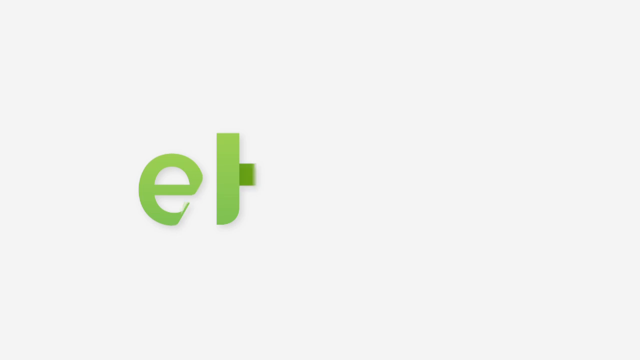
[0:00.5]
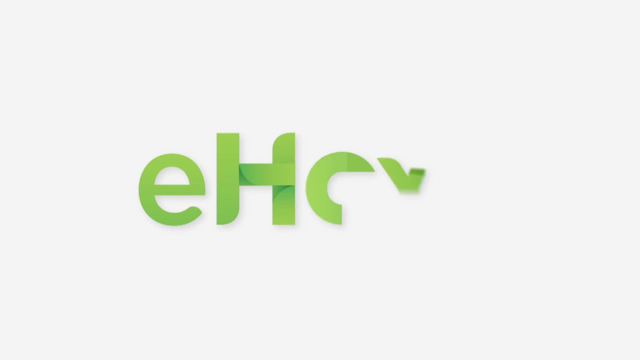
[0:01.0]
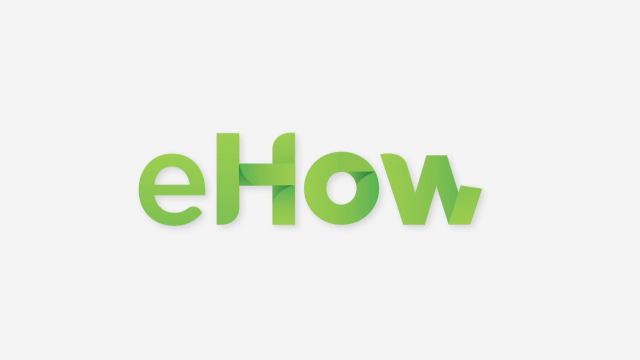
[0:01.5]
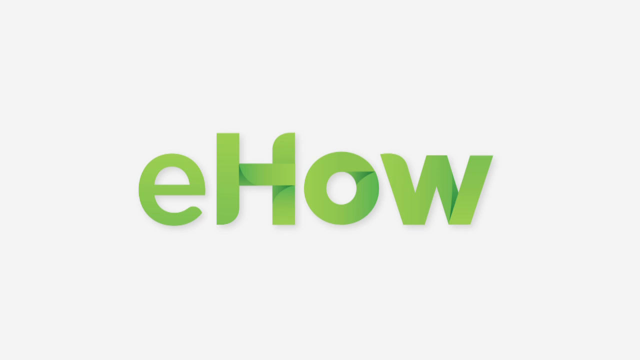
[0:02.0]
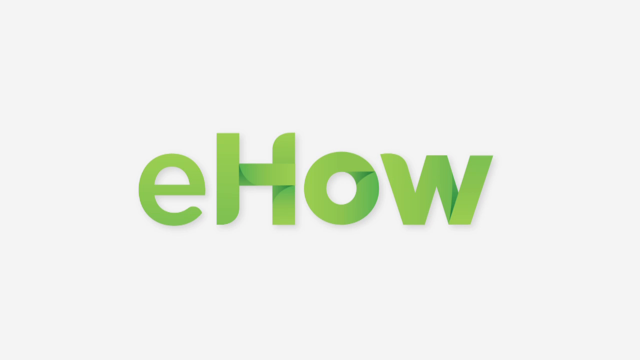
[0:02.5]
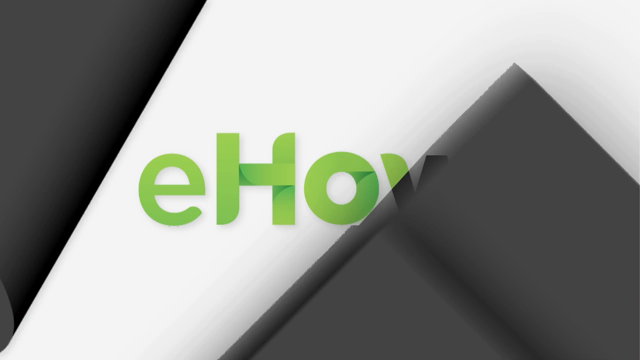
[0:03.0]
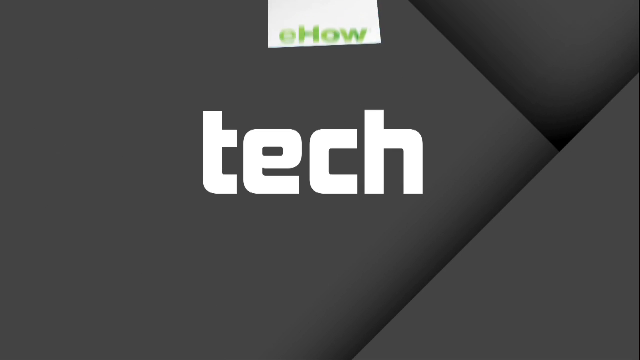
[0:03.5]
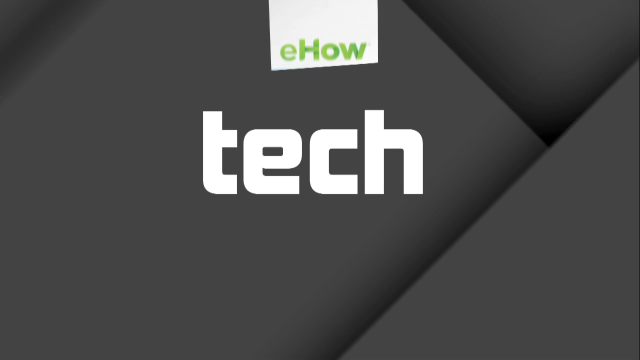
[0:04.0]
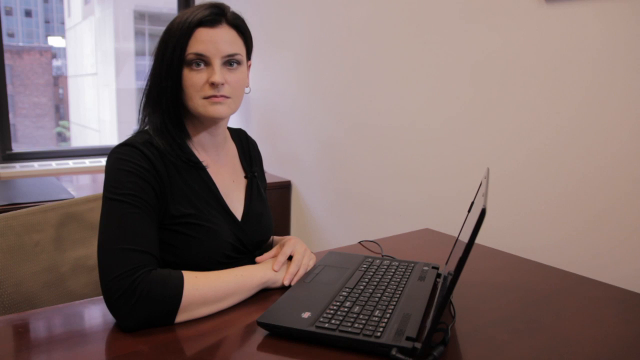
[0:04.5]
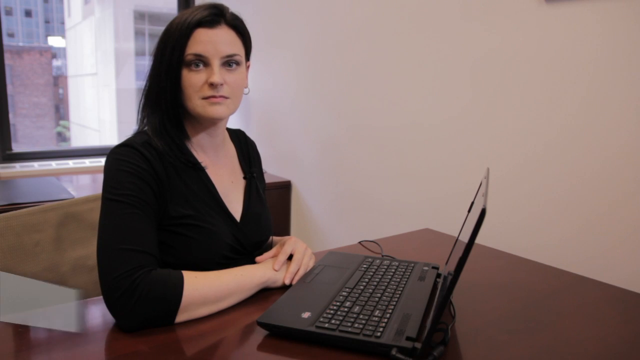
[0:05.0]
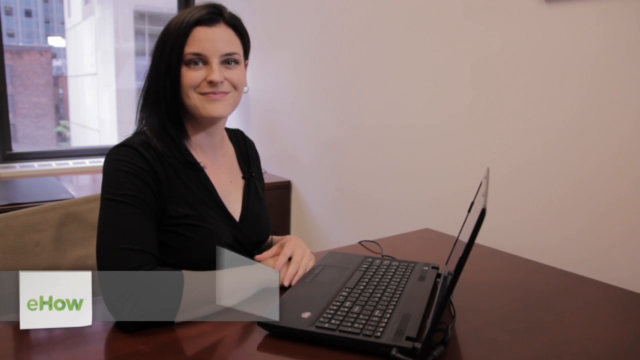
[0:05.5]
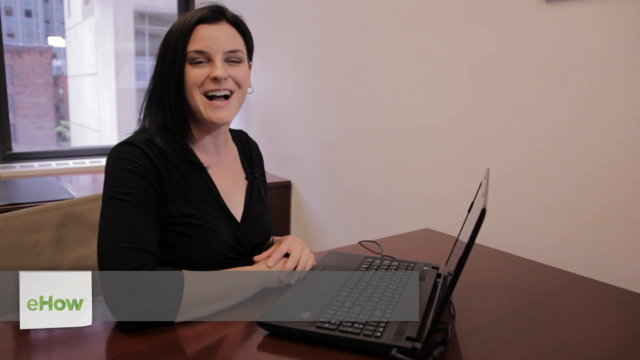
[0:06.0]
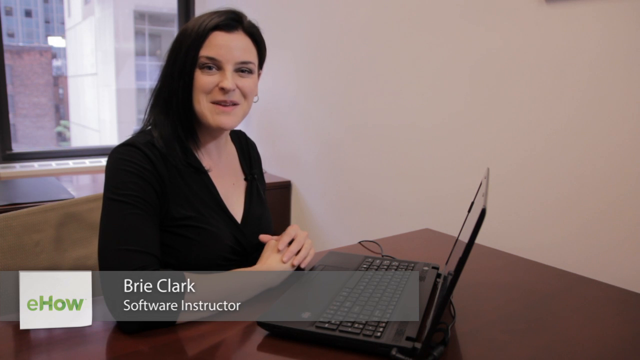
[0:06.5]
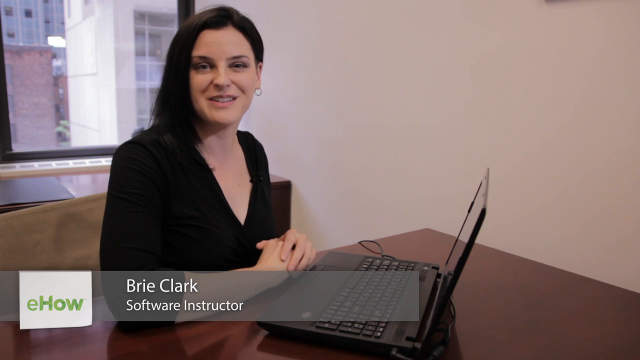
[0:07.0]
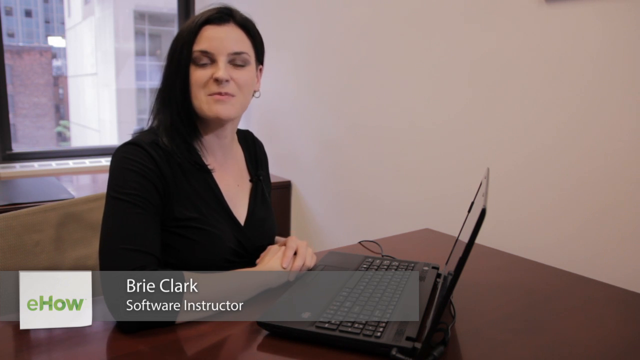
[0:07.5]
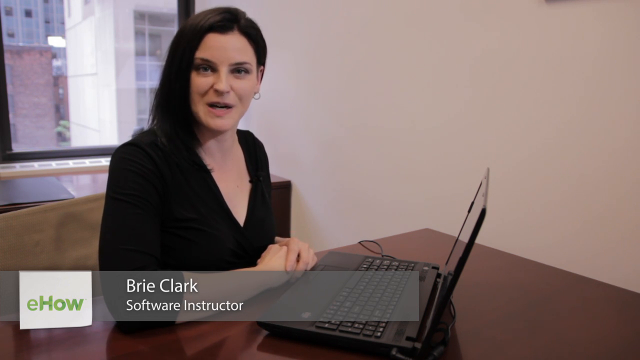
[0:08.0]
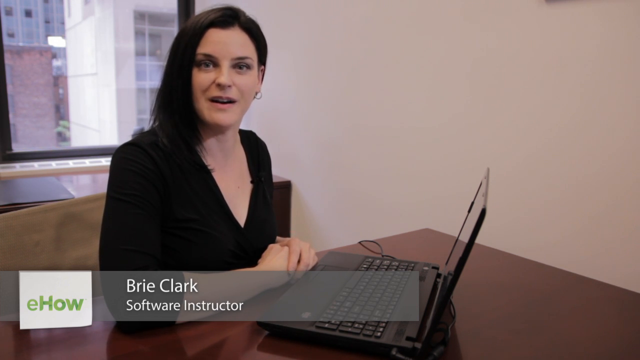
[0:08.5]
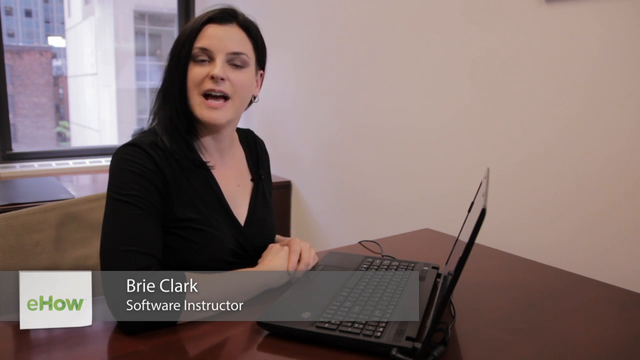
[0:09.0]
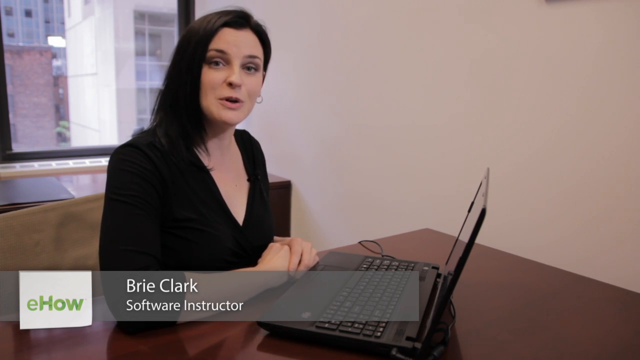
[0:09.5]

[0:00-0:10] The video begins with the eHow Tech logo on the screen, then switches to a woman sitting at a desk in front of an open laptop computer, talking to the camera. A banner on the lower part of the screen gives her name as Brie Clark and identifies her as a software instructor. She has her hands on the desk, one resting on the other. She has dark hair and wears a black top, and she sits sideways with her head turned, talking directly to the camera. She is in an office setting with a window behind her that looks out over what appear to be either apartment buildings or other office buildings in the distance.